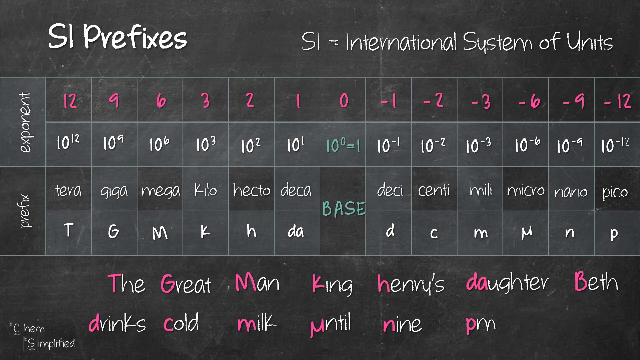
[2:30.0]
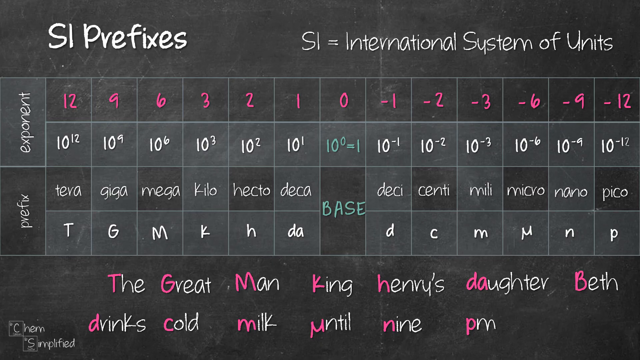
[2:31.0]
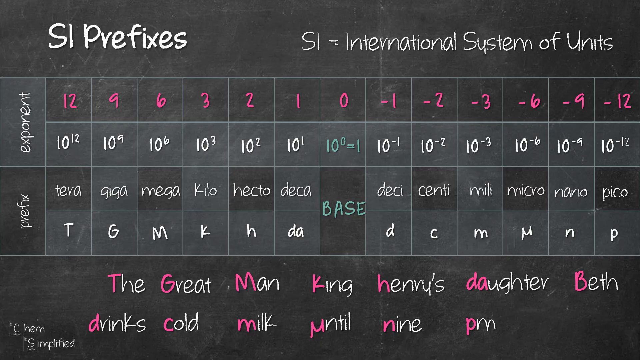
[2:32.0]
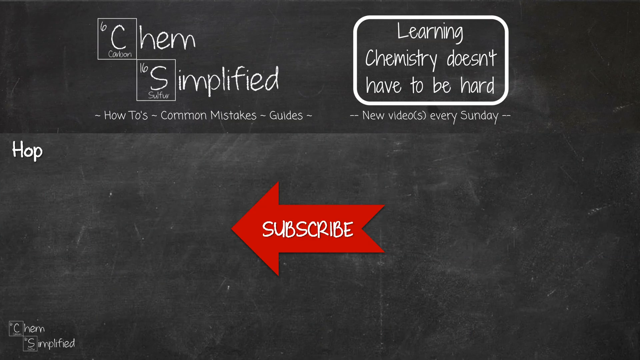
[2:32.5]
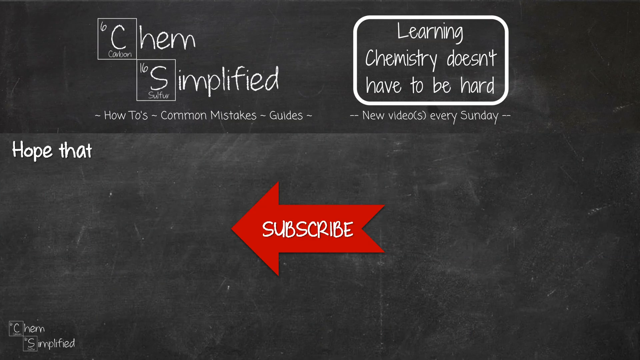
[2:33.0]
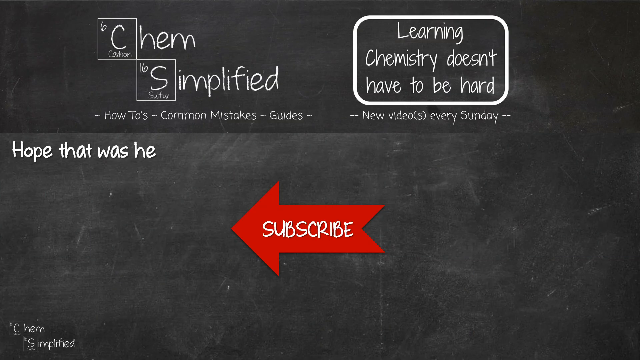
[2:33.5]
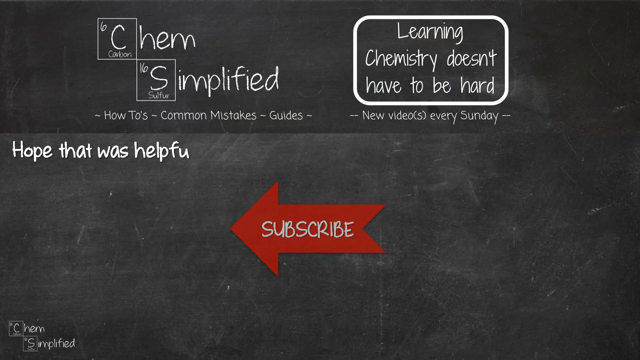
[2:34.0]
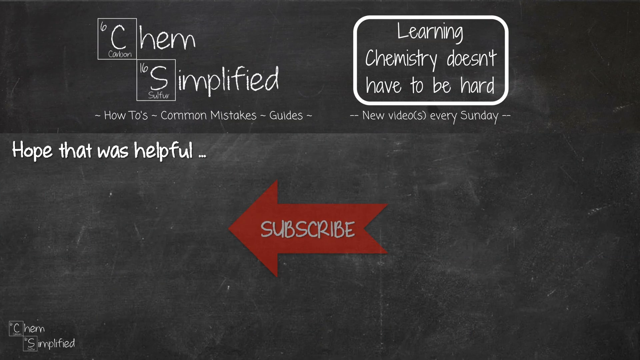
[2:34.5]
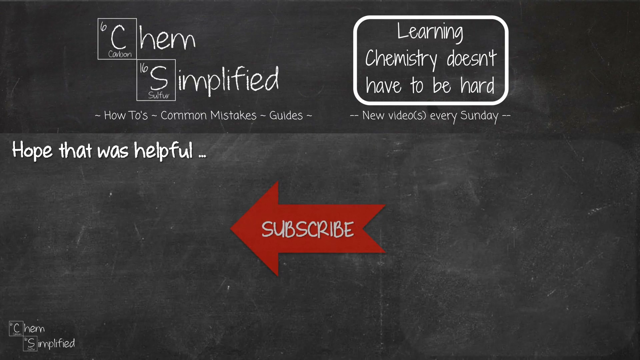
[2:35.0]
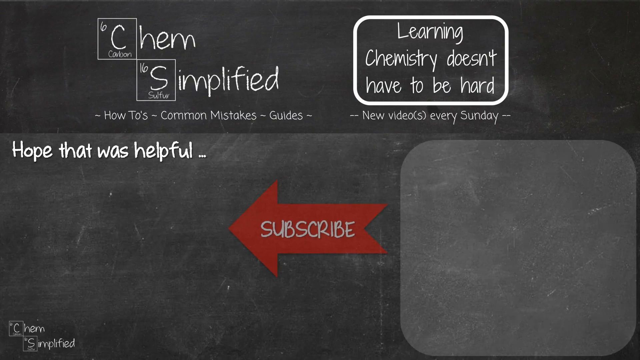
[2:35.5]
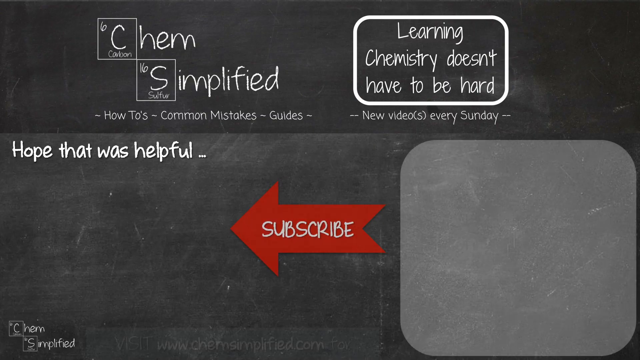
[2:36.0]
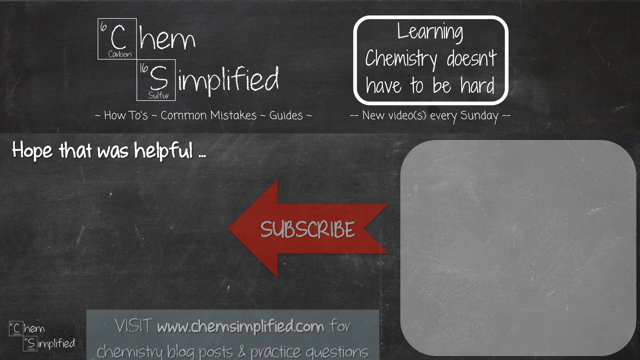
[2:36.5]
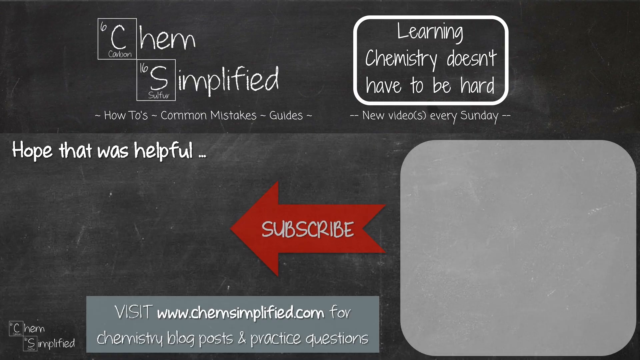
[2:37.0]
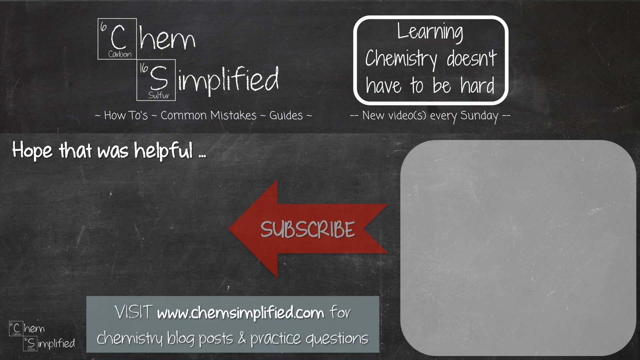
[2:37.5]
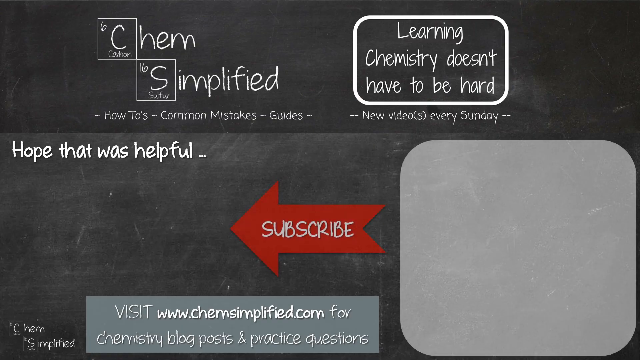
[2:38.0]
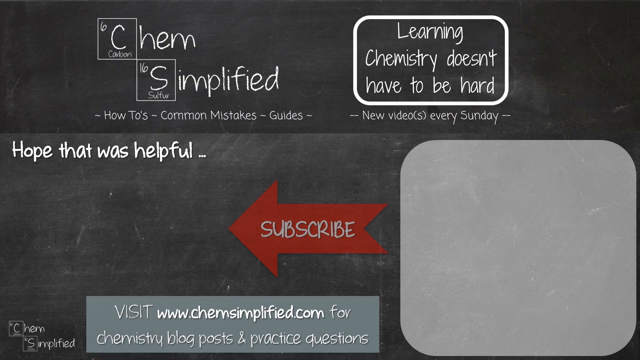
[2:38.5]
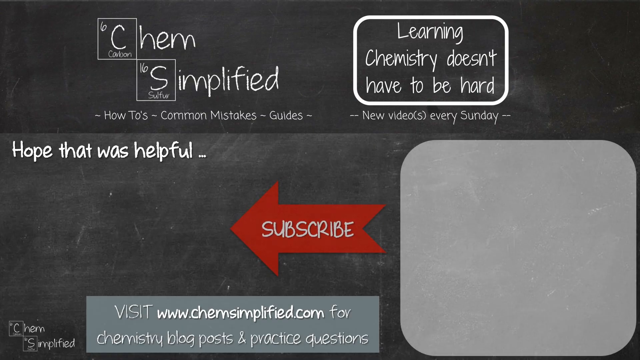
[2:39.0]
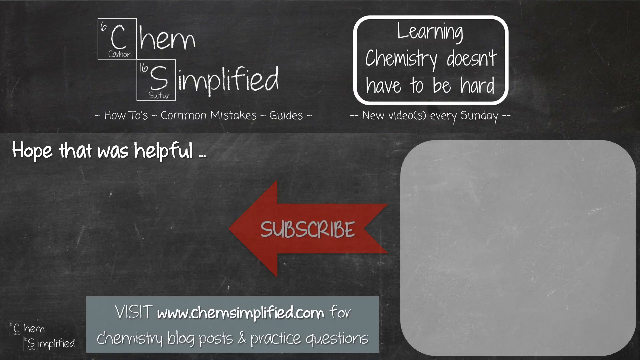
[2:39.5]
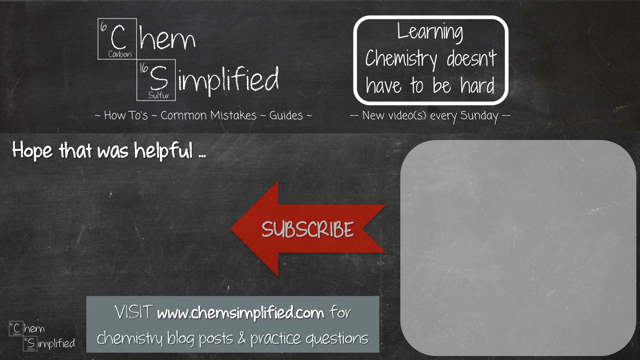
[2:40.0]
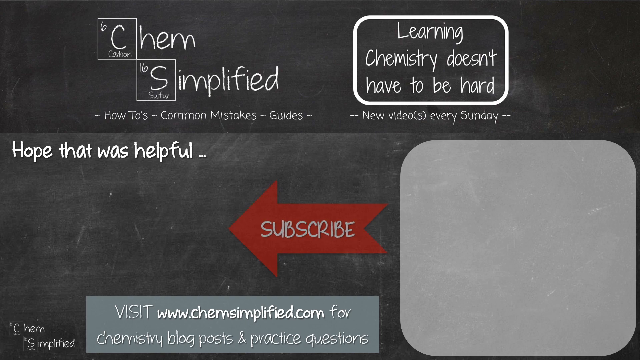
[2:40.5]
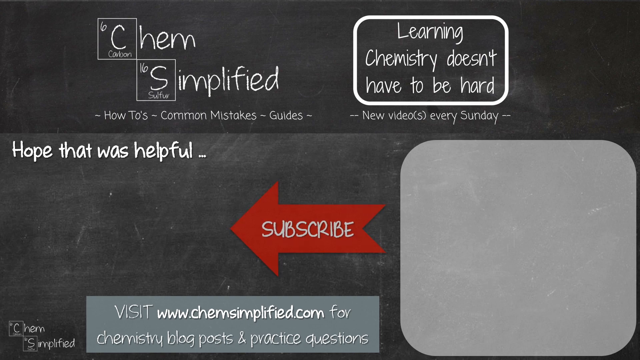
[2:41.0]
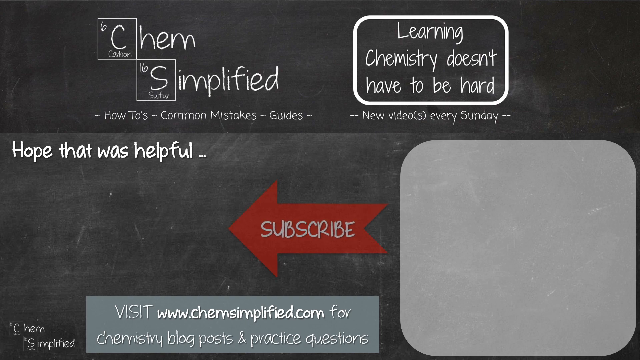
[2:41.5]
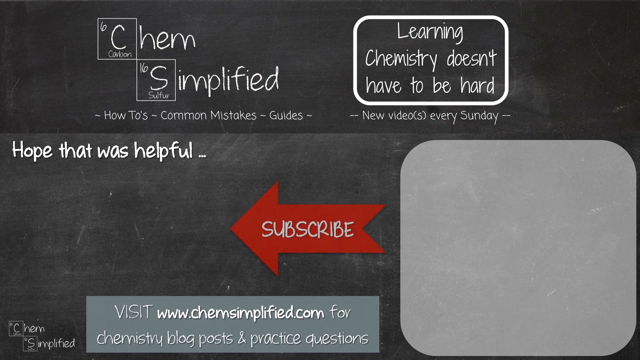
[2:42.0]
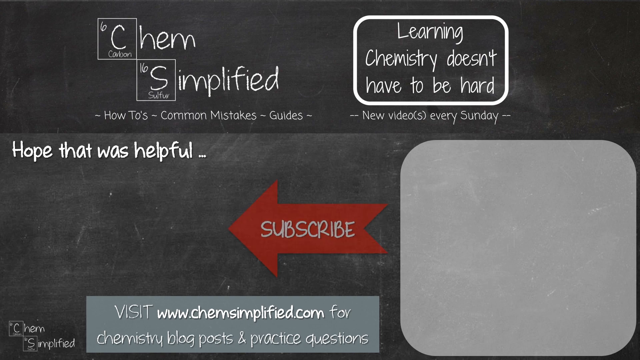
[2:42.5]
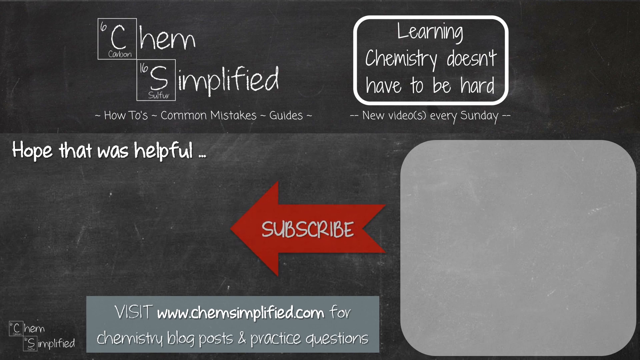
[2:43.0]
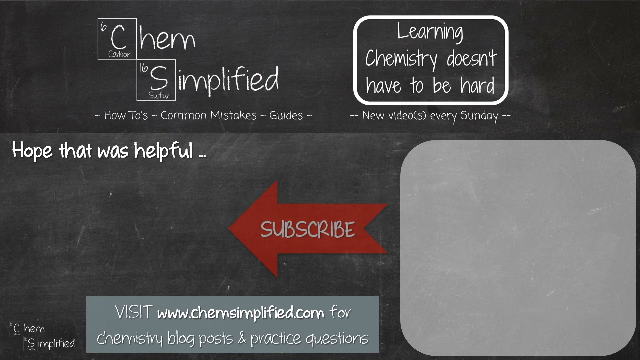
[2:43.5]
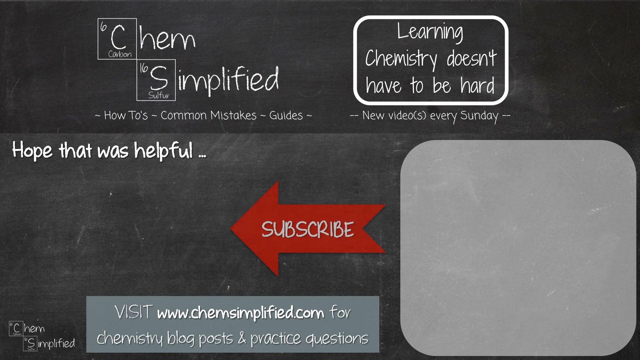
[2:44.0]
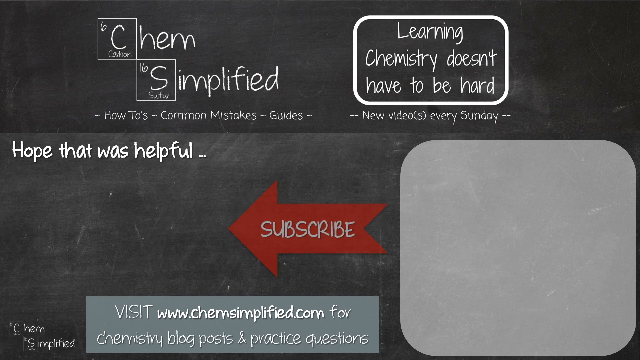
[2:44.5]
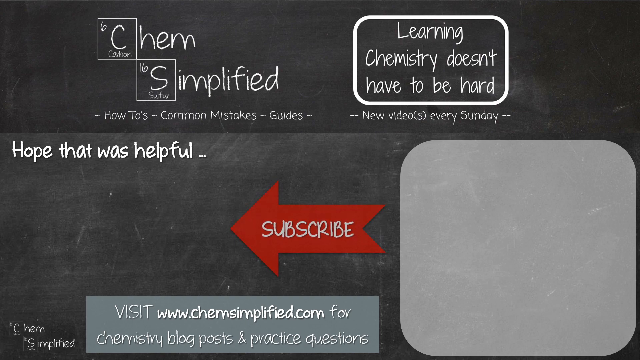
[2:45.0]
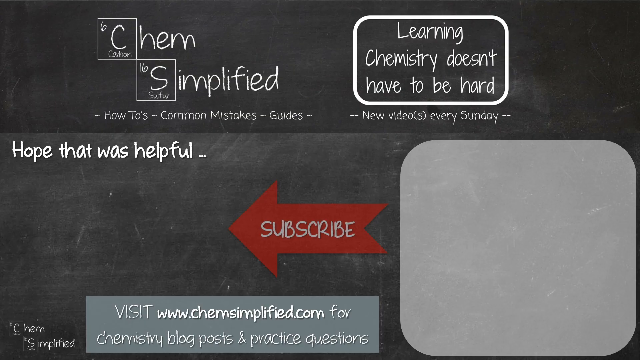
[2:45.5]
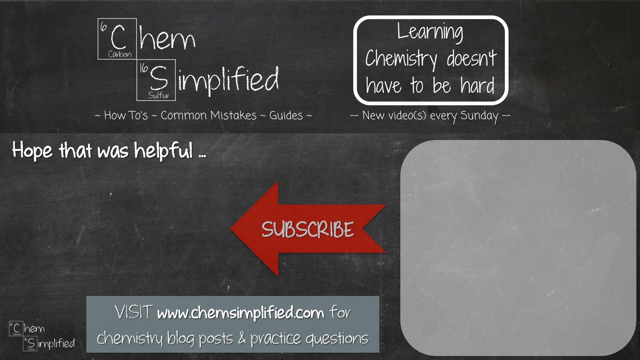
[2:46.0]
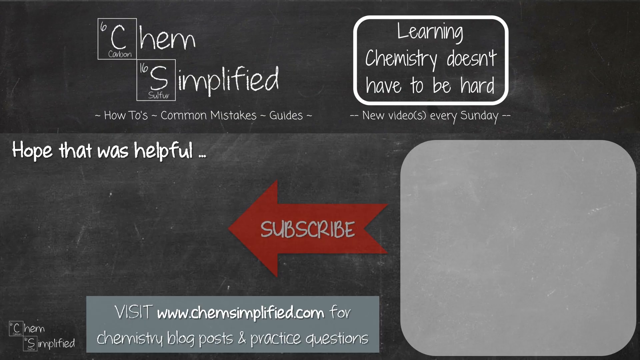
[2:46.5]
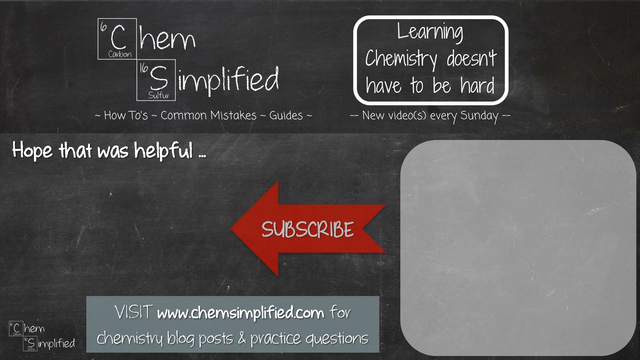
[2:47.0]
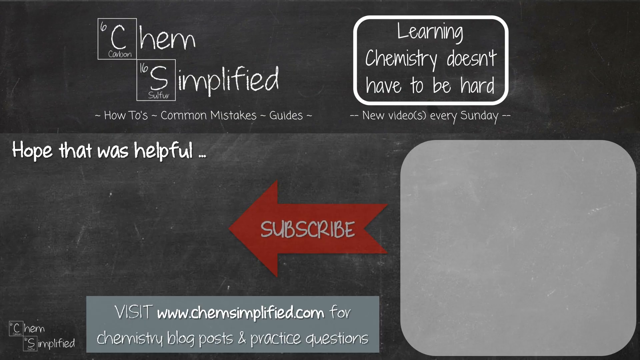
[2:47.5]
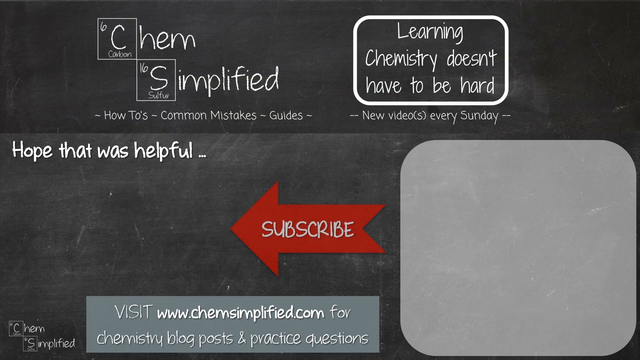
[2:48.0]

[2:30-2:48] The sentence "the great man King Henry's daughter, Beth, drinks cold milk until 9pm" is listed at the bottom of the screen, below a grid relating the prefixes tera, giga, mega, kilo, hecto, deca, deci, centi, milli, micro, nano and pico to their exponents. The first letter of each word is highlighted in dark or bright pink and corresponds to a prefix. The exponents are 10 to the 12th, 10 to the 9th, 10 to the 6th, 10 to the 3rd, 10 to the 2nd, 10 to the 1st, 10 to the negative 1, 10 to the negative 2, 10 to the negative 3, 10 to the negative 6, 10 to the negative 9 and 10 to the negative 12. The exponent numbers 12, 9, 6, 3, 2, 1, 0, negative 1, negative 2, negative 3, negative 6, negative 9 and negative 12 on the exponents chart are also in pink, matching the letters in the sentence.